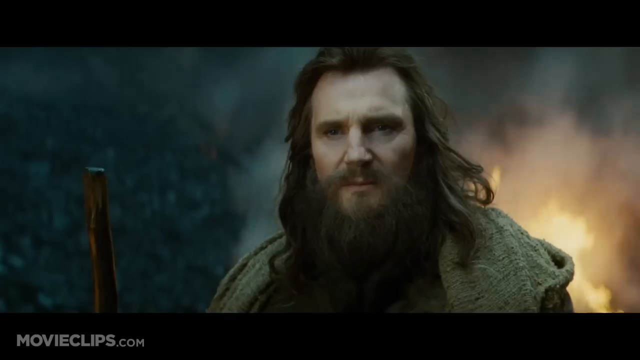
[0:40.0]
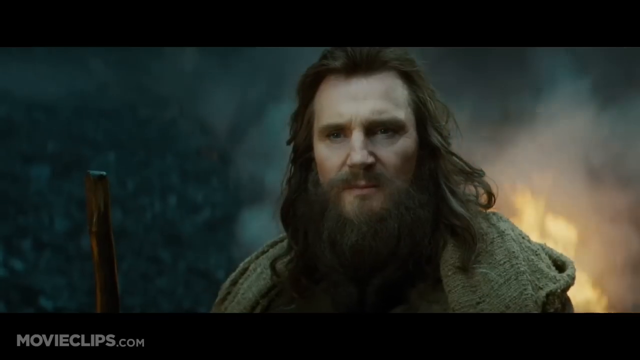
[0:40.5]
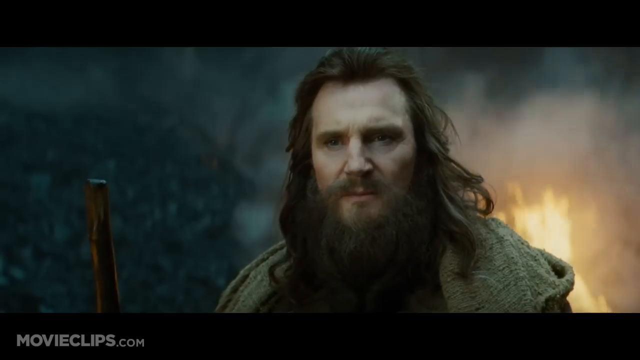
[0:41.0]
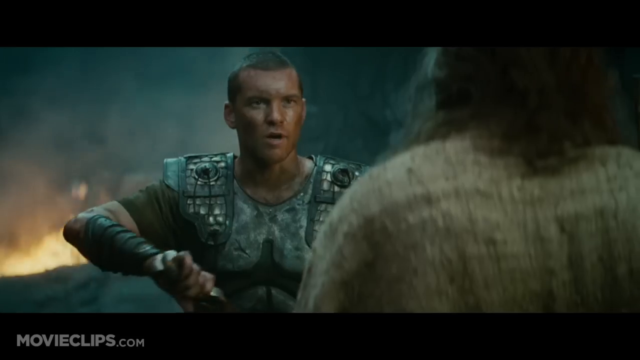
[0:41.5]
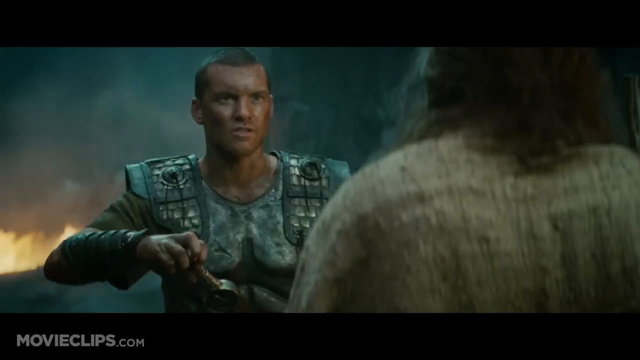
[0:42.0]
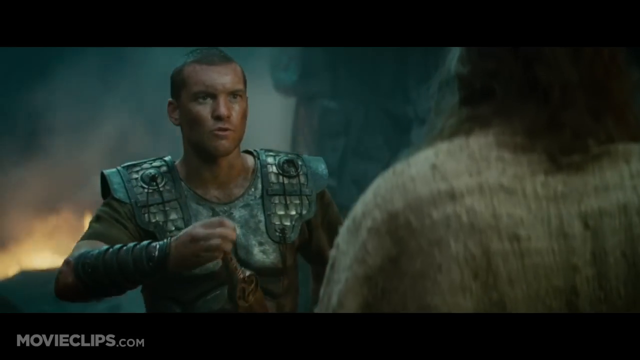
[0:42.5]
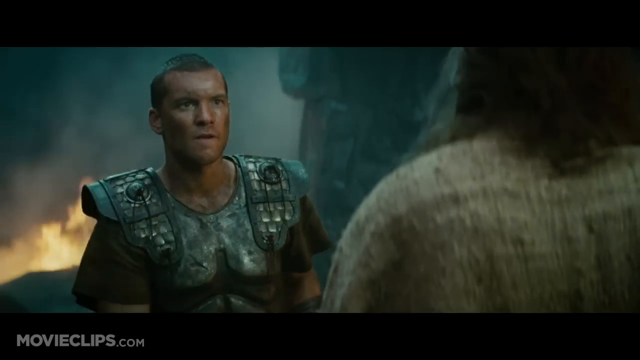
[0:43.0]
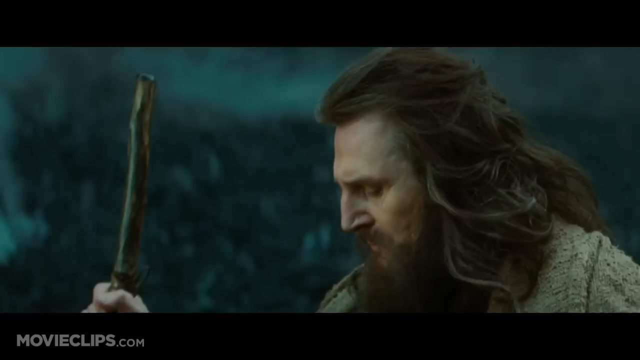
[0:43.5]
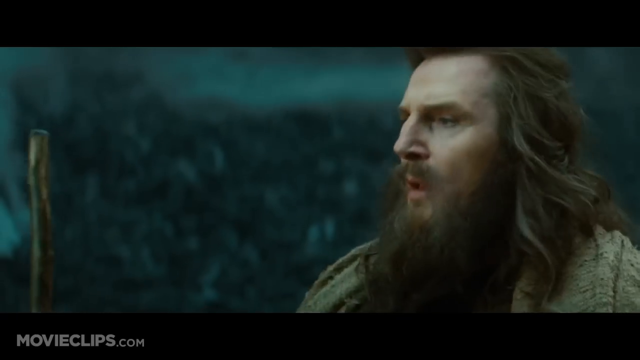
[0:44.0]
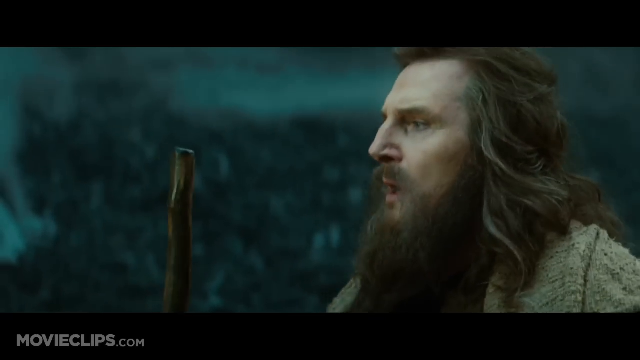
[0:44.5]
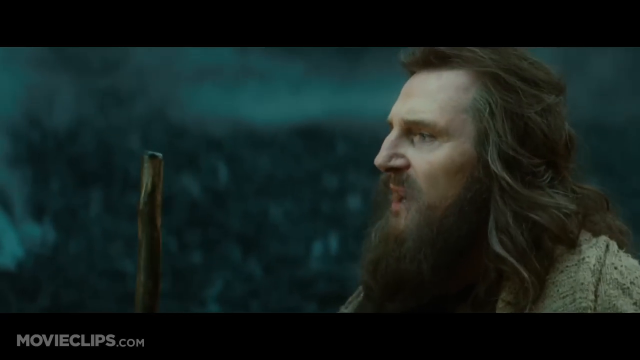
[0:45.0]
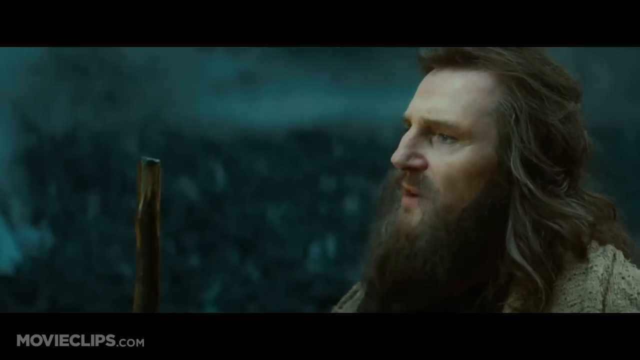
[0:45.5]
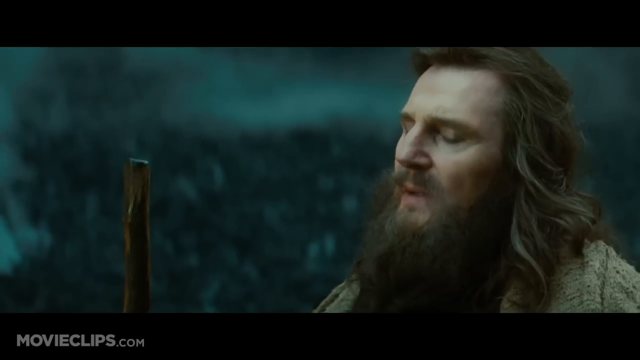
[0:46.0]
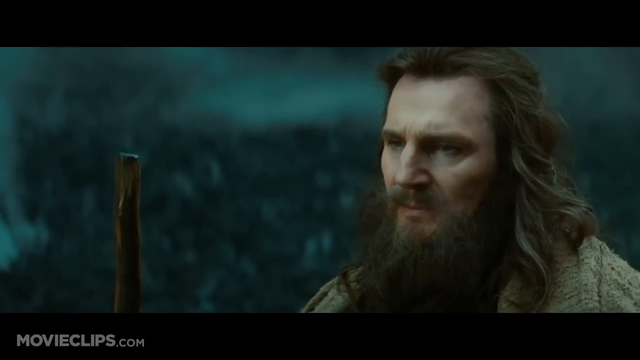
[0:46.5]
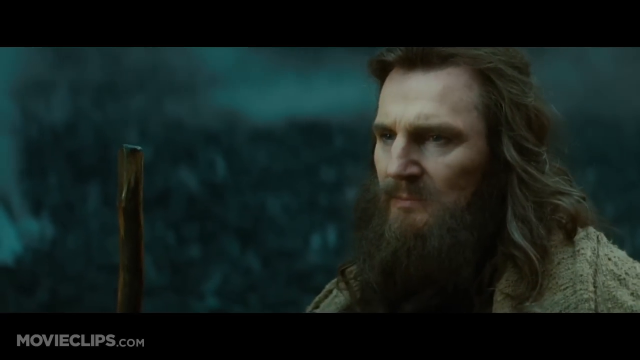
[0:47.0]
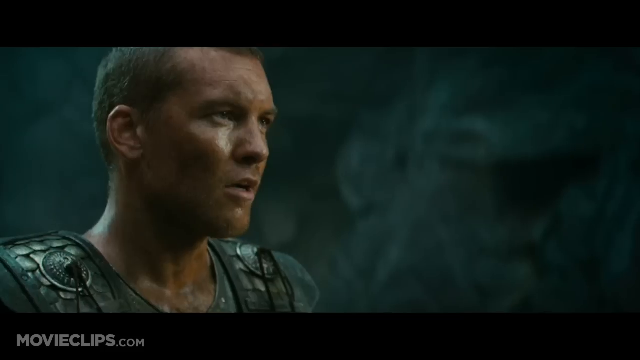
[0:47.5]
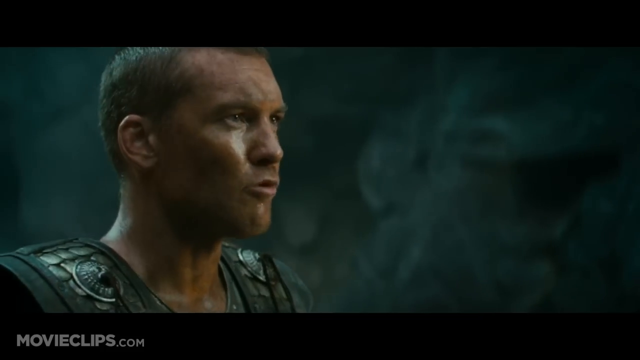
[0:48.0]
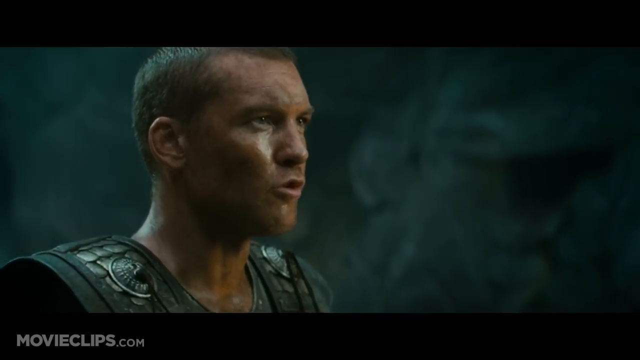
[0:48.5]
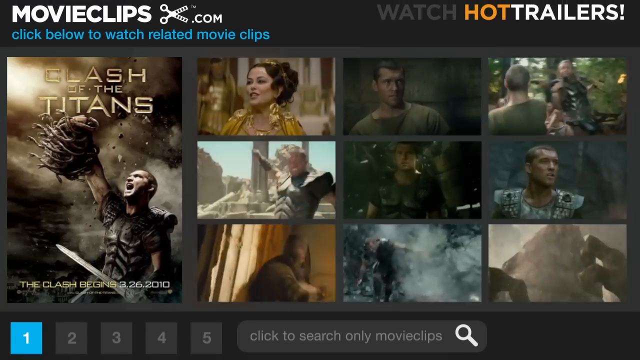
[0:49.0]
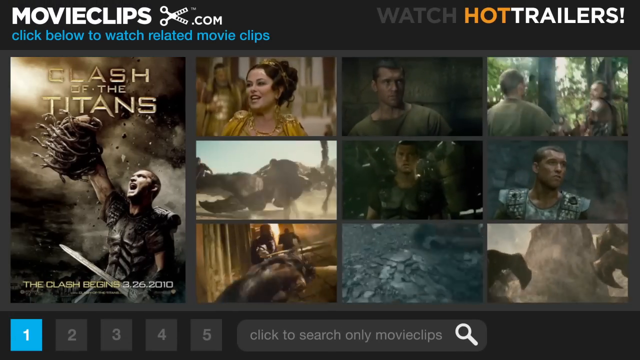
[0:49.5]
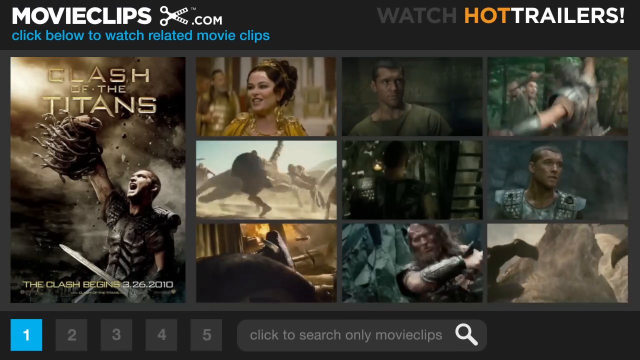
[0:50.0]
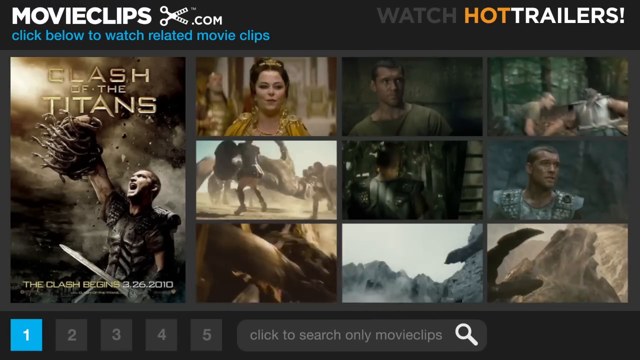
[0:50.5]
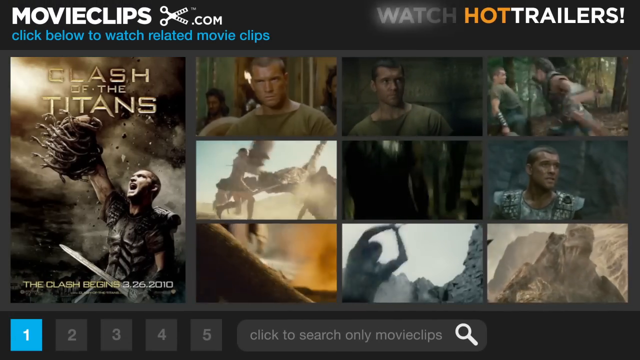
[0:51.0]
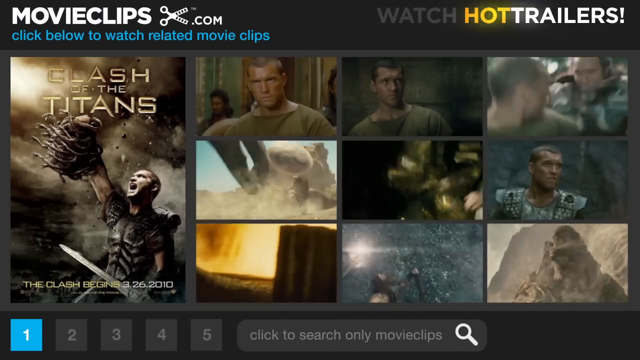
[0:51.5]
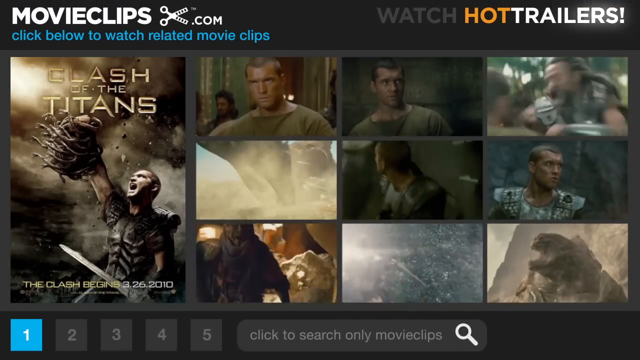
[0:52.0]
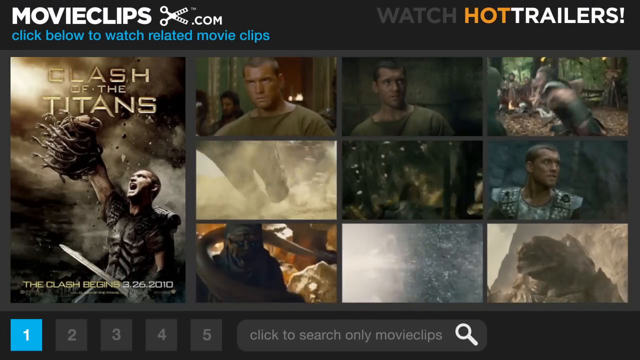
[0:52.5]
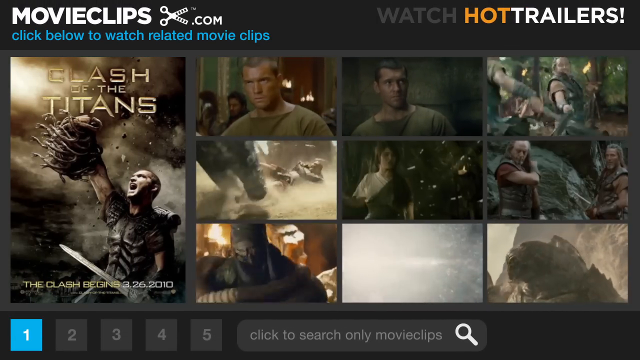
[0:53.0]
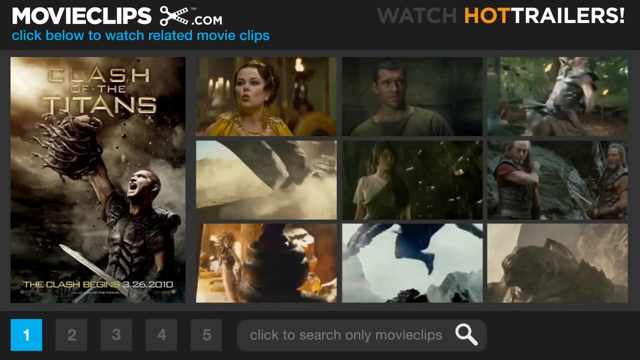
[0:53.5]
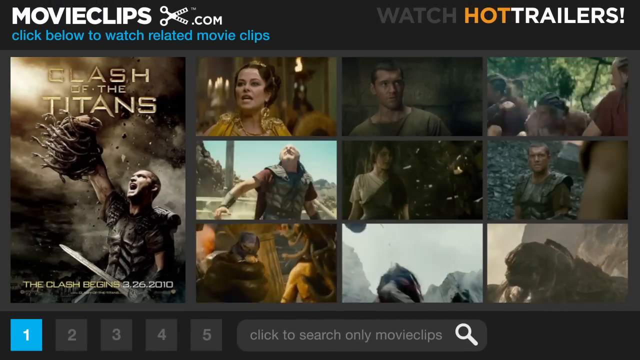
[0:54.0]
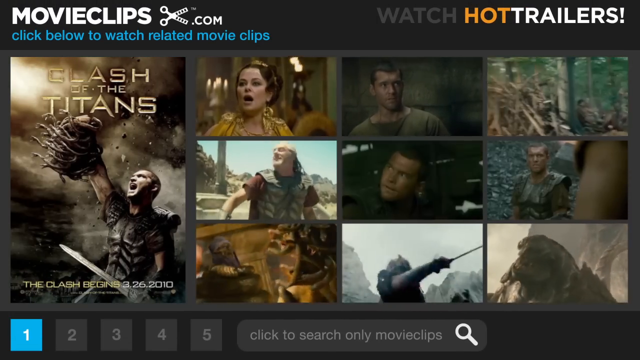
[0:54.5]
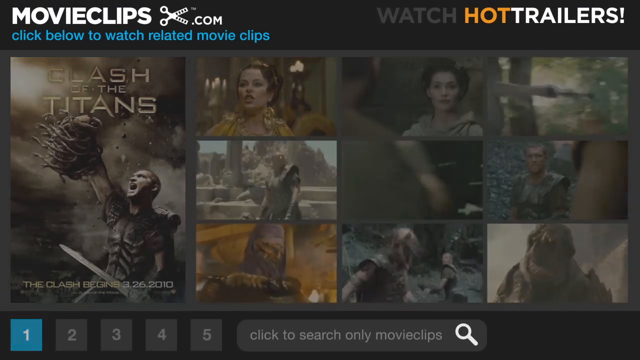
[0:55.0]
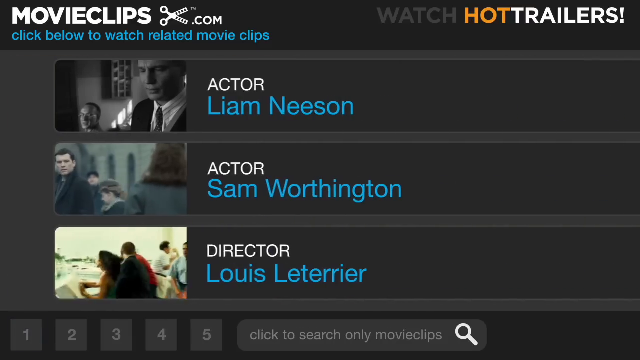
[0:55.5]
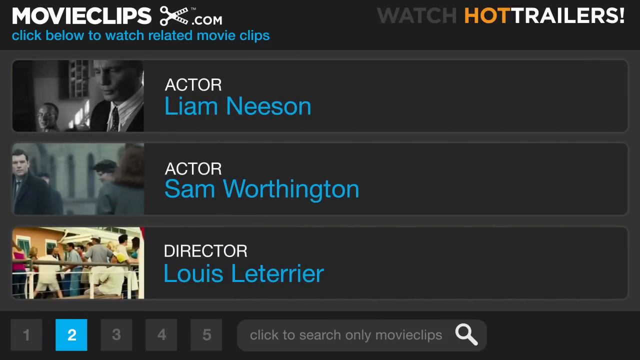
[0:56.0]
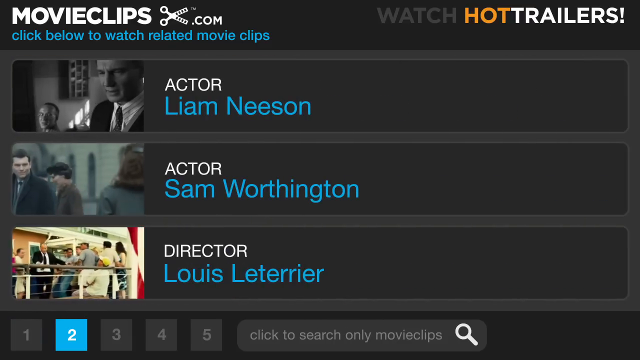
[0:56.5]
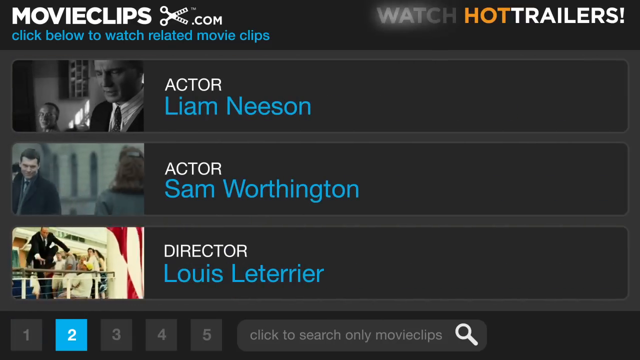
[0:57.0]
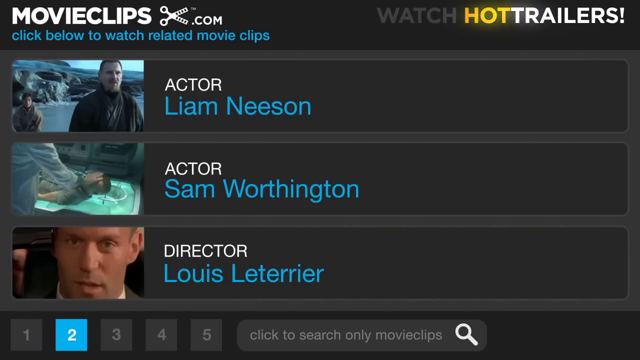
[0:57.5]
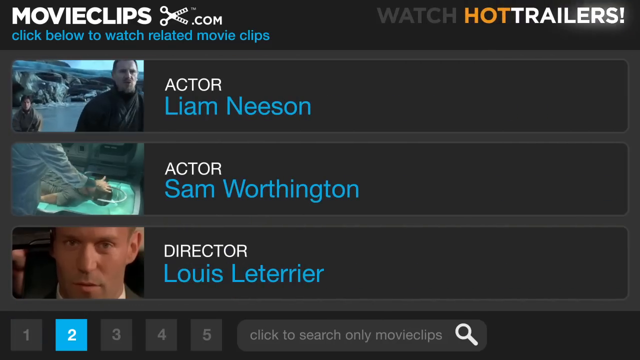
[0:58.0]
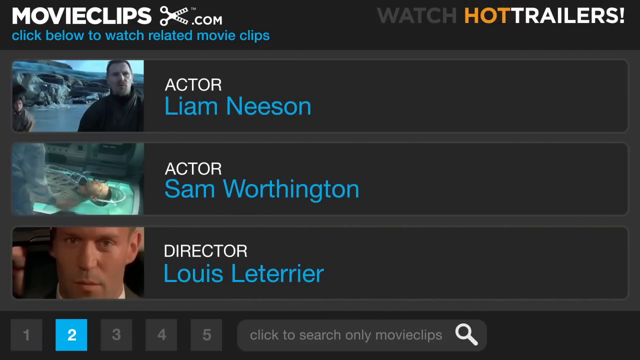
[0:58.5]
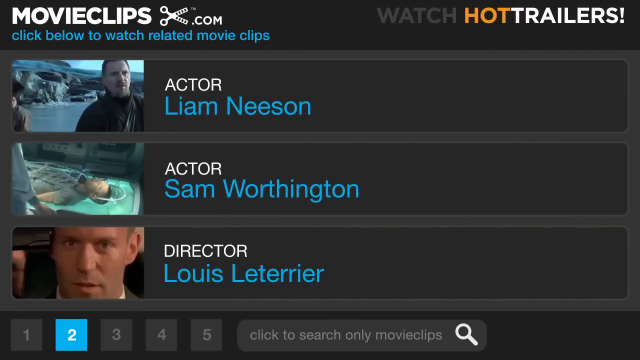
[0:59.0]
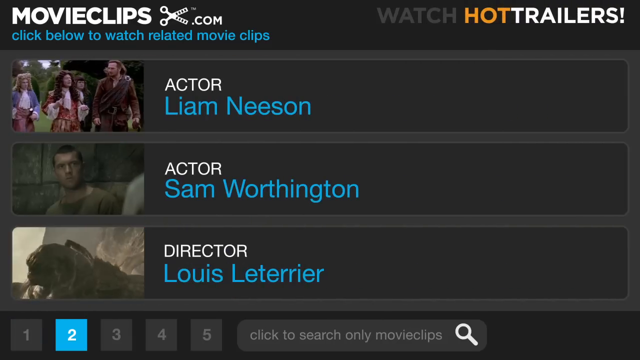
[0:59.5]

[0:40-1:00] A movieclips.com page shows the name of the movie, "Clash of the Titans," along with different clips from it. In the far right corner at the top, "Hot Trailers" is written, and below is an option to watch related movie clips. Lower on the page, a date of 26 March 2010 is written. The page then lists the actors Liam Neeson, Sam Worthington and Louis Leteria, each with images of scenes from the movie next to their name.